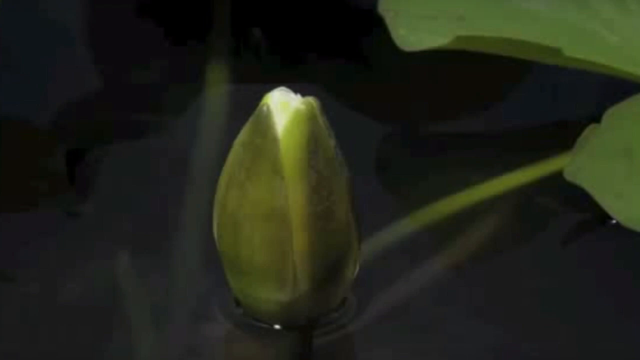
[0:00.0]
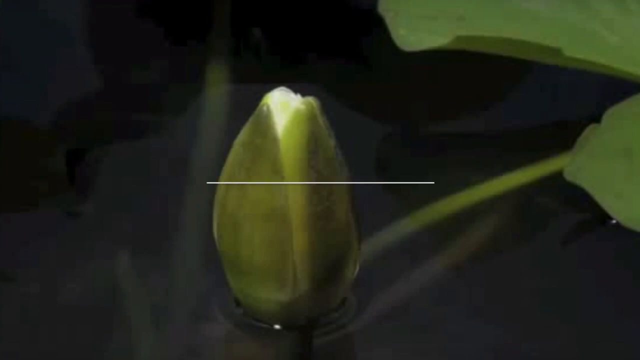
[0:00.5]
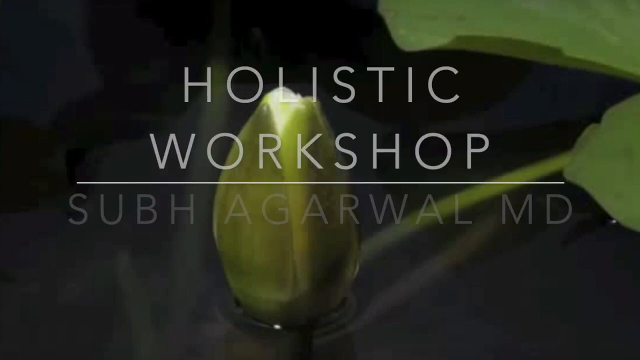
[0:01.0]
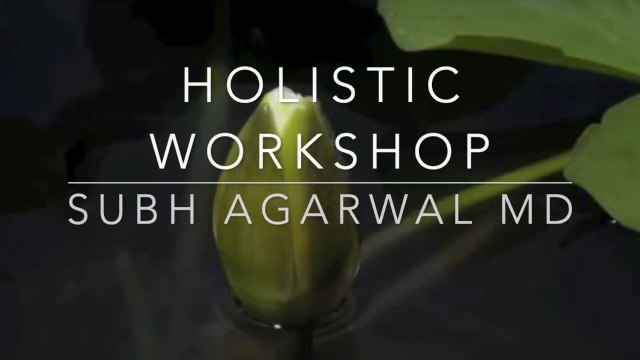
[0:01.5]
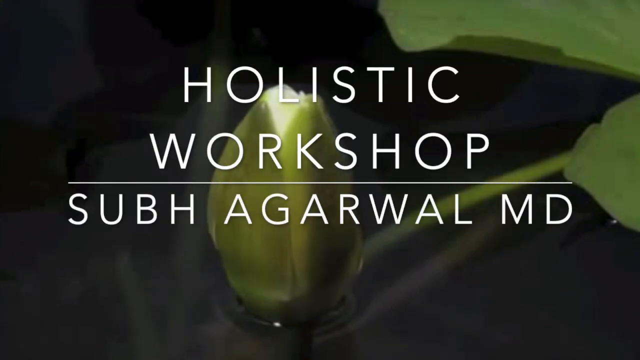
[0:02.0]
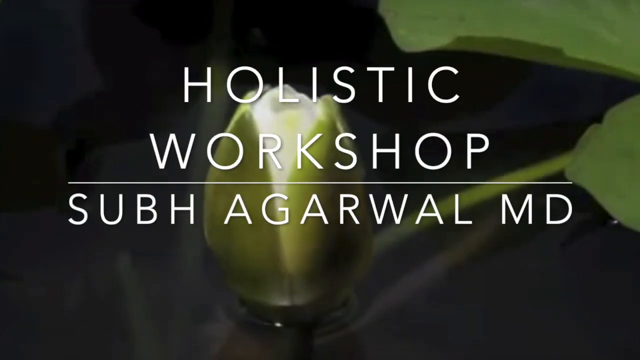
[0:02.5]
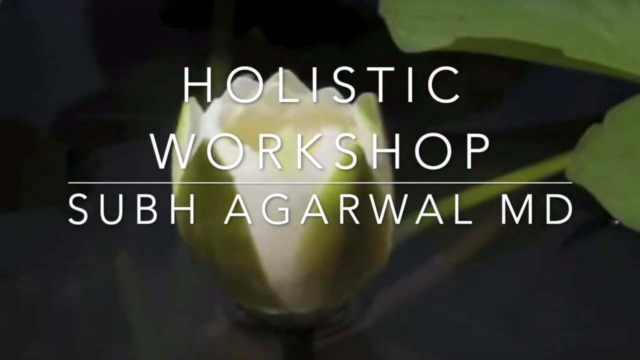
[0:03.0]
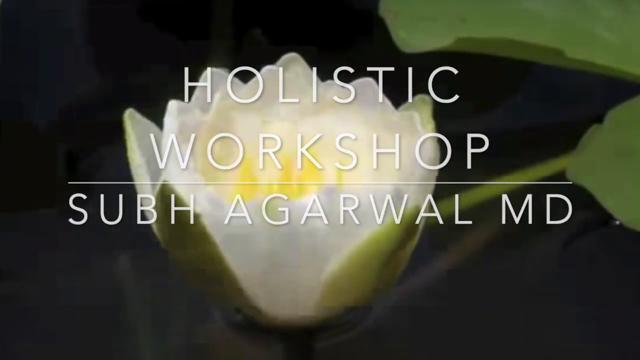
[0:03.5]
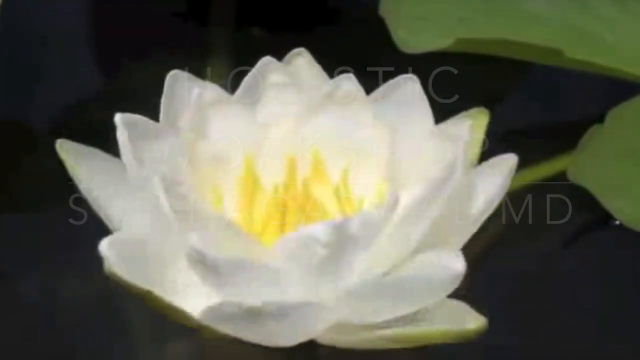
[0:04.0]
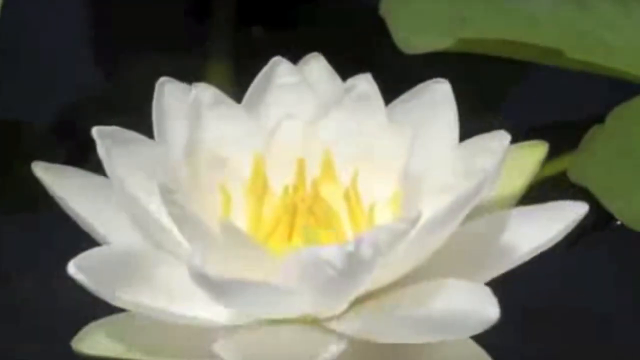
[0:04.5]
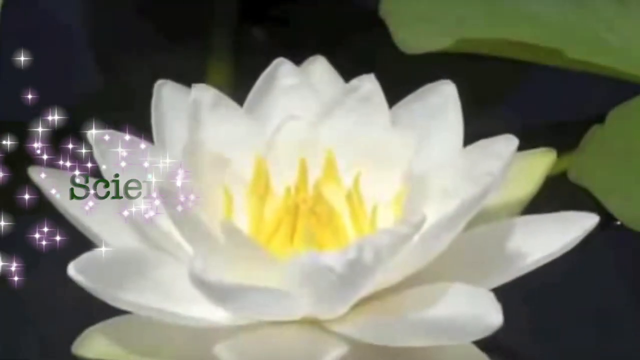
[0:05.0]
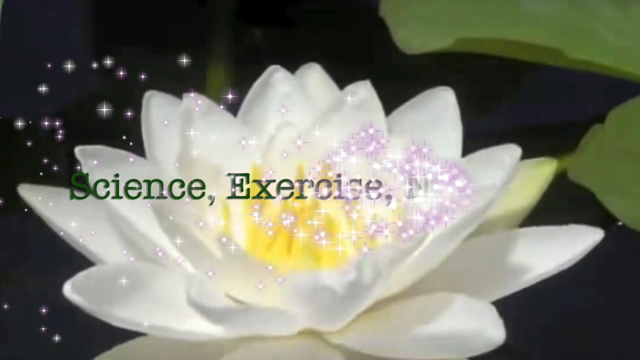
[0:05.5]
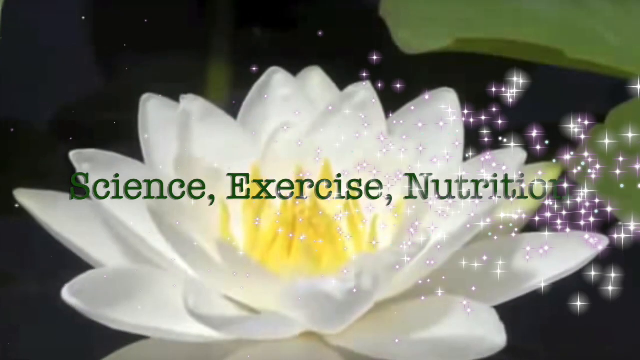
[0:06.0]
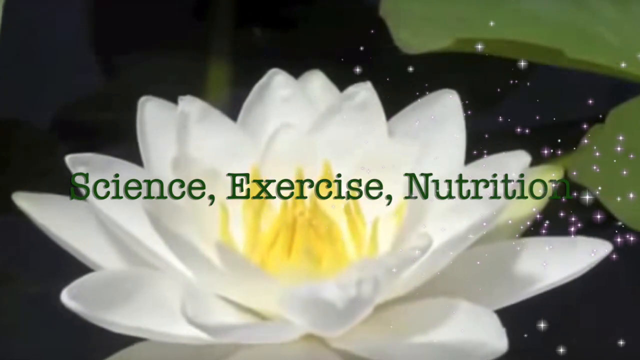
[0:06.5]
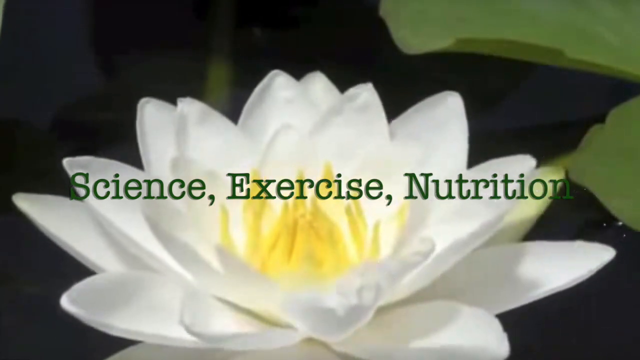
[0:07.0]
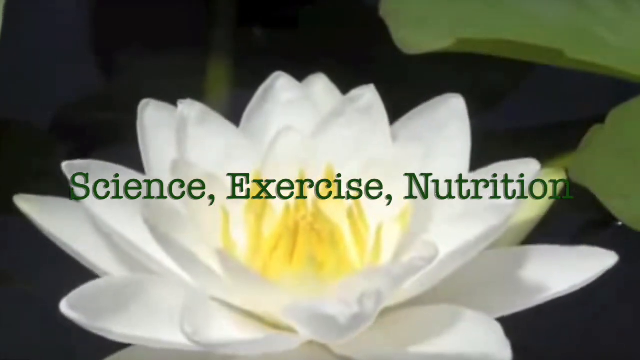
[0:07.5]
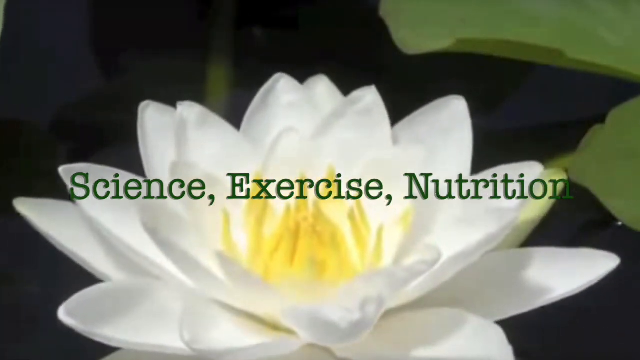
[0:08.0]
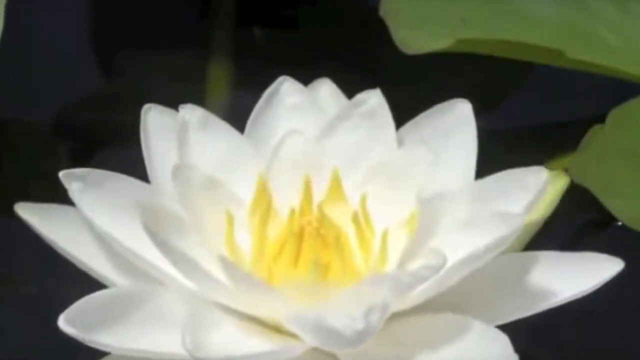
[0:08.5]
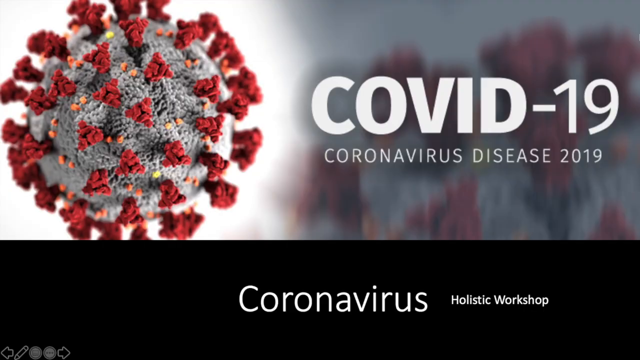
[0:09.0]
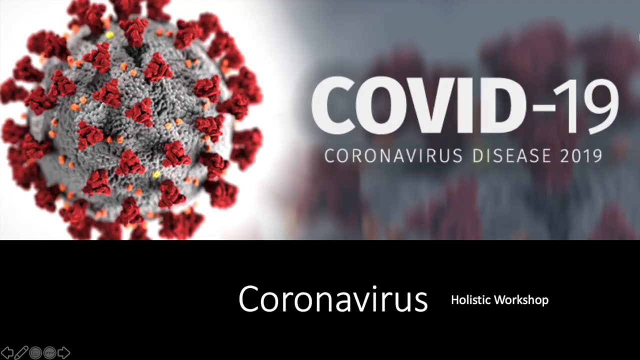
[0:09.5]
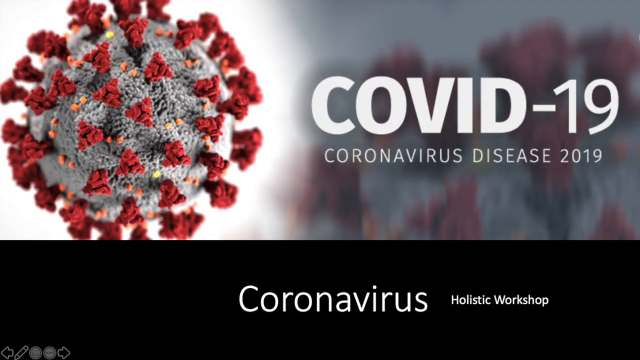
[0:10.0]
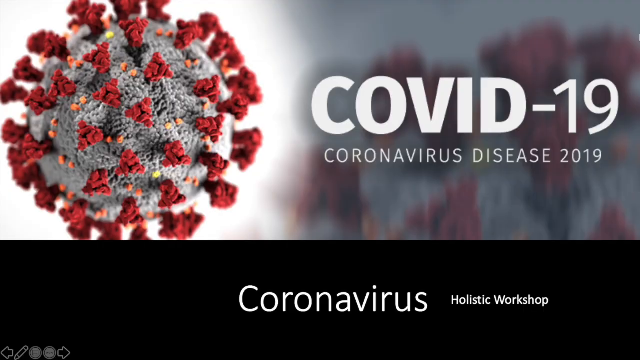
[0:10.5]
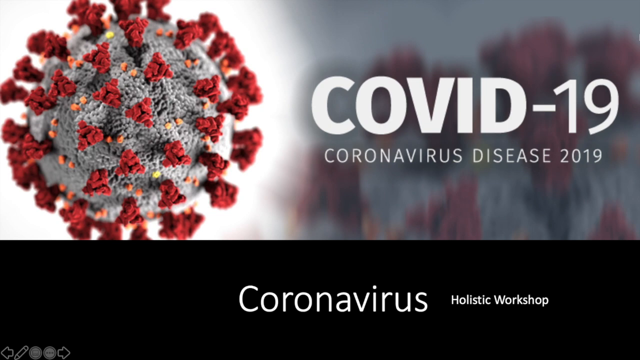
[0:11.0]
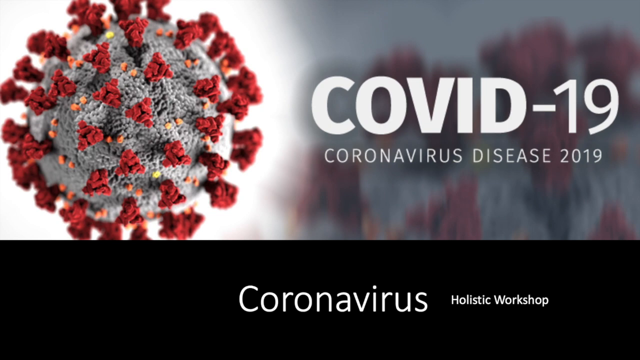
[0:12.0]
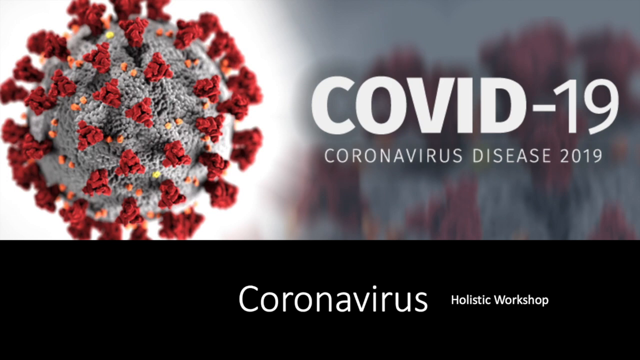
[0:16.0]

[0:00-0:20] A still picture shows a flower that looks like it is about to bloom. The background has the appearance of an artist's drawing, like a French artist from the 17th or 18th century drawing their version of realism. As the video starts, a title reading "holistic workshop" appears at the top in large font, a white line is drawn underneath it, and below that appears the name of a doctor, "Soob Argwal MD". Behind this title, the flower starts to bloom and continues to expand, changing from a light green bud into a flower with white petals and a group of yellow stamen in its center.